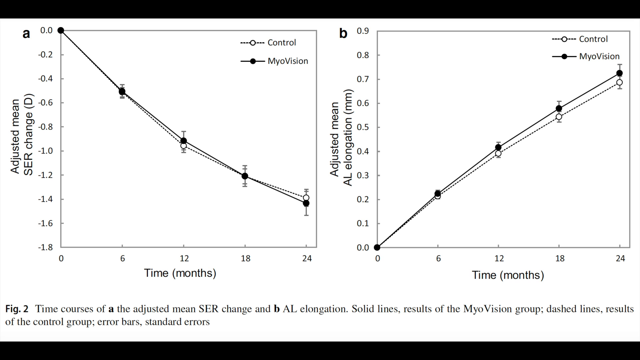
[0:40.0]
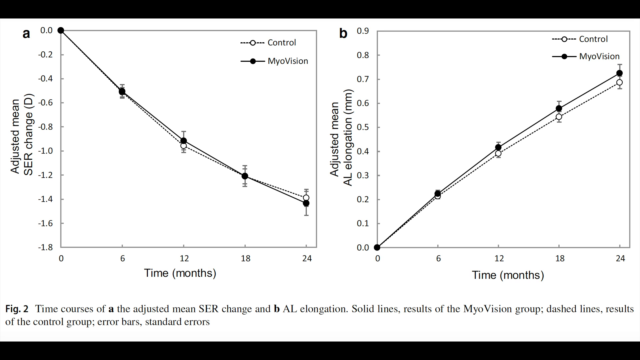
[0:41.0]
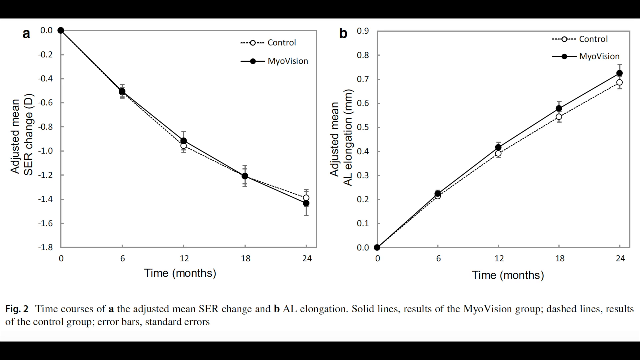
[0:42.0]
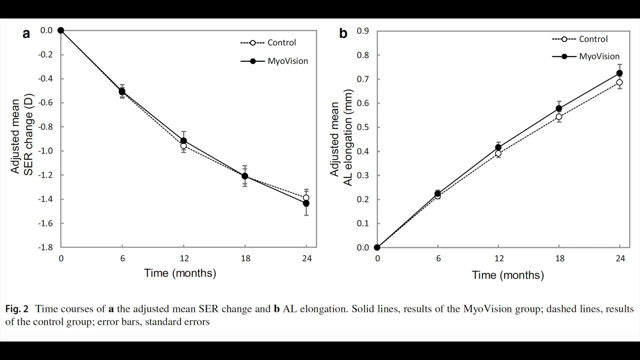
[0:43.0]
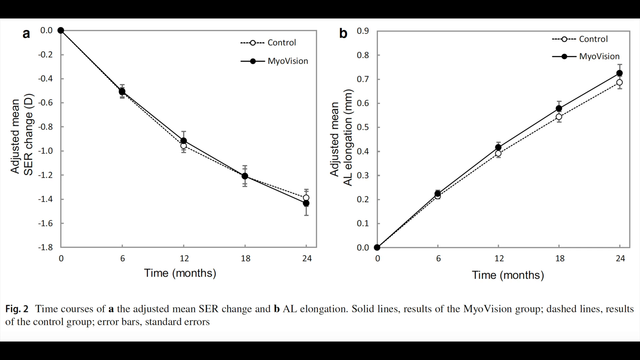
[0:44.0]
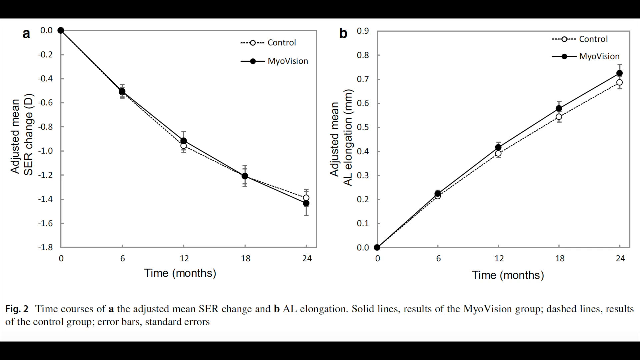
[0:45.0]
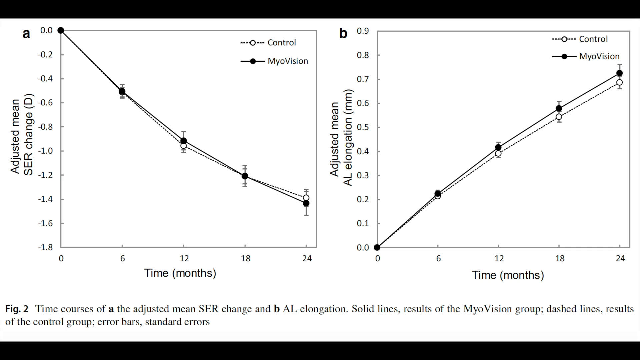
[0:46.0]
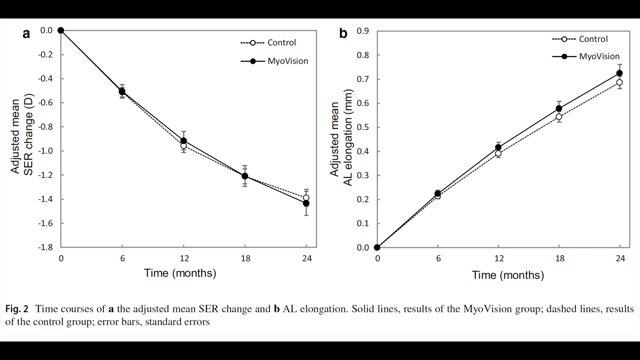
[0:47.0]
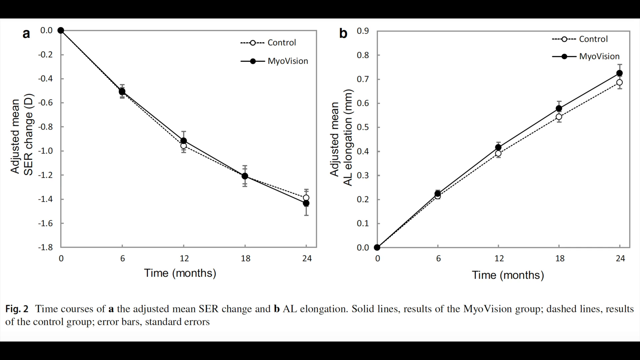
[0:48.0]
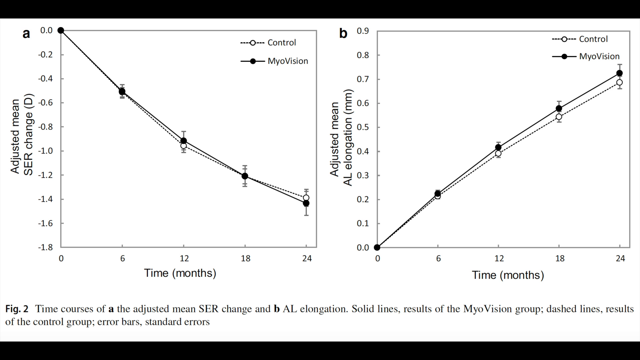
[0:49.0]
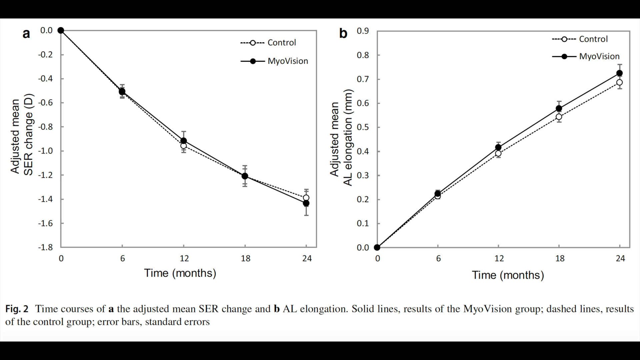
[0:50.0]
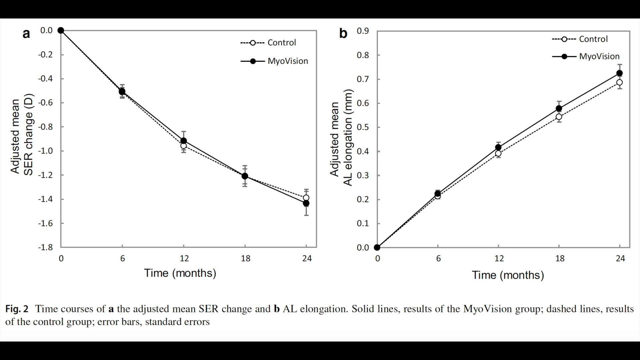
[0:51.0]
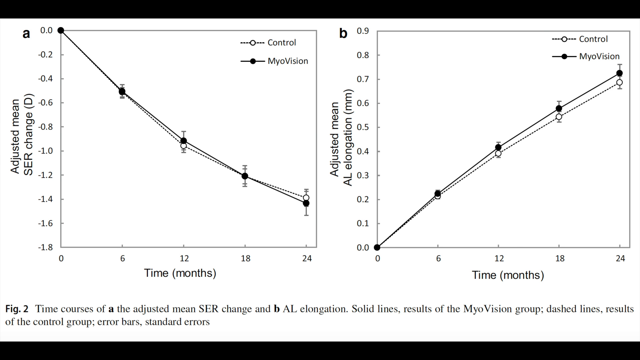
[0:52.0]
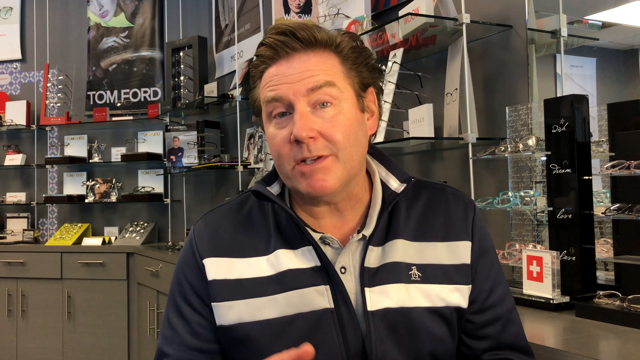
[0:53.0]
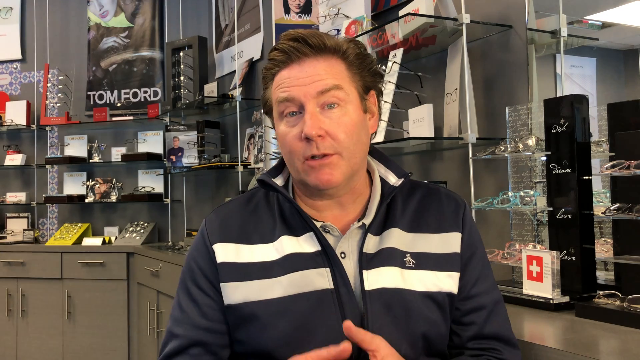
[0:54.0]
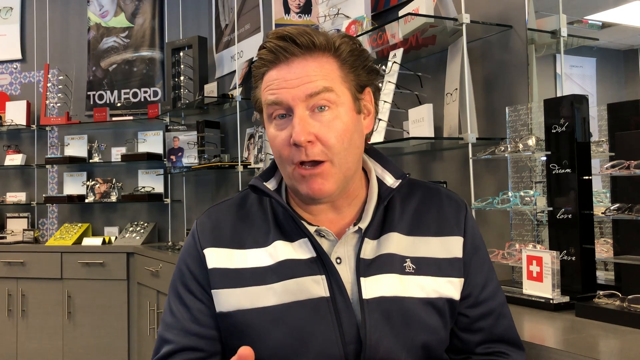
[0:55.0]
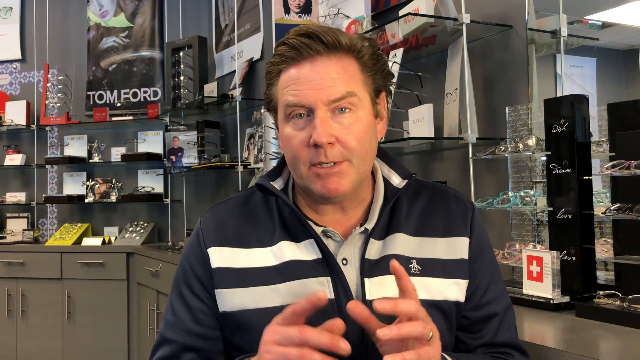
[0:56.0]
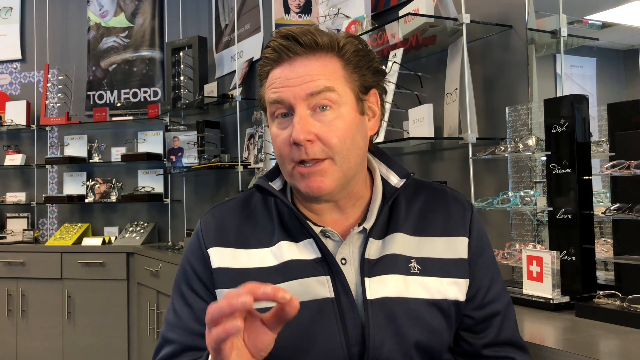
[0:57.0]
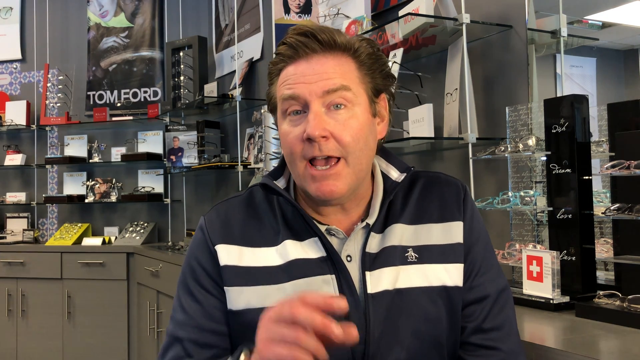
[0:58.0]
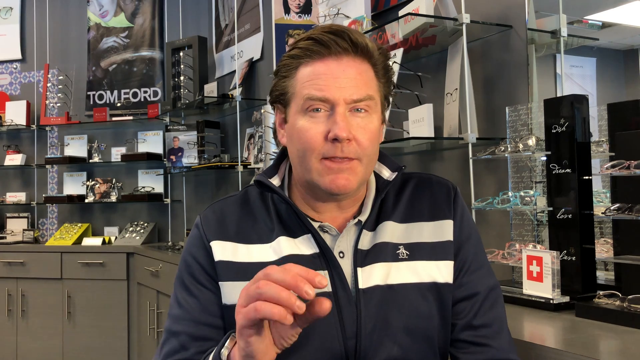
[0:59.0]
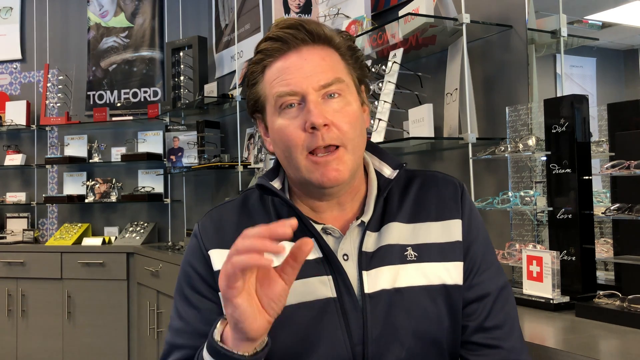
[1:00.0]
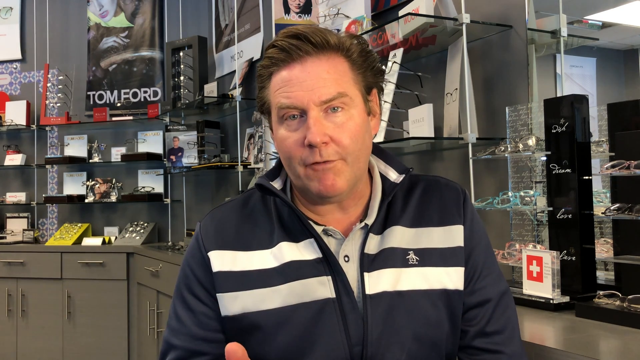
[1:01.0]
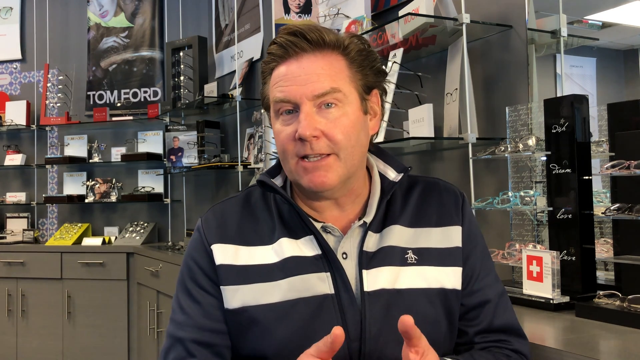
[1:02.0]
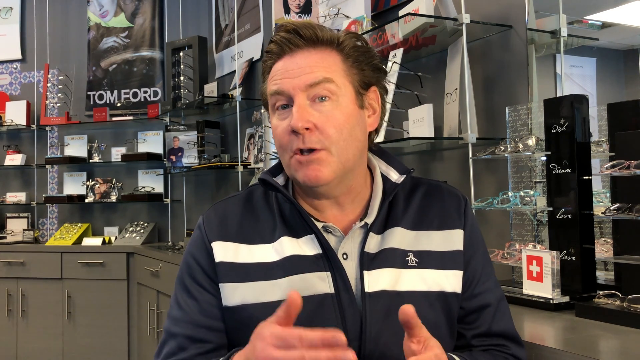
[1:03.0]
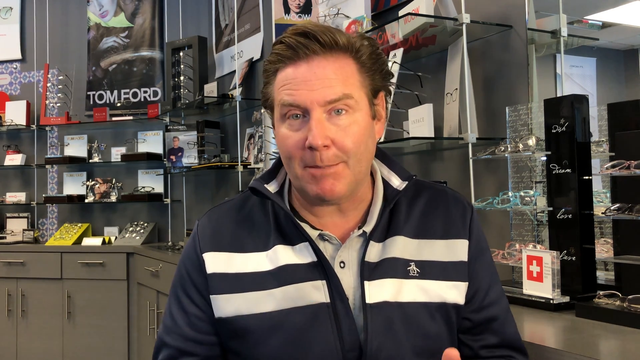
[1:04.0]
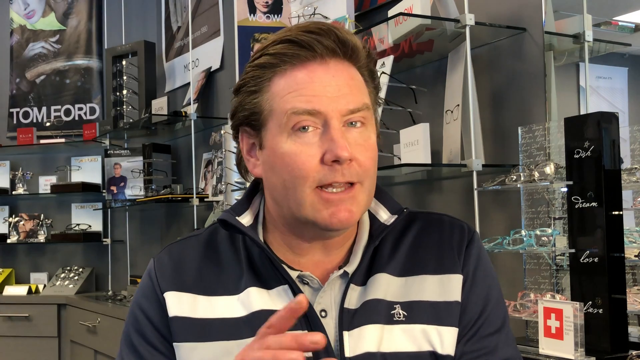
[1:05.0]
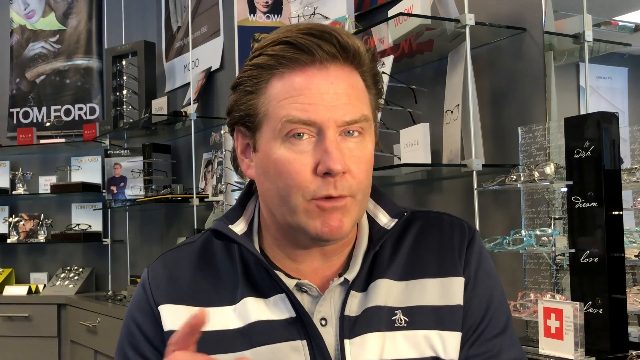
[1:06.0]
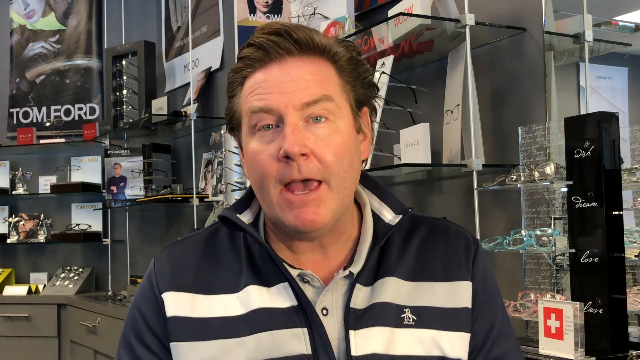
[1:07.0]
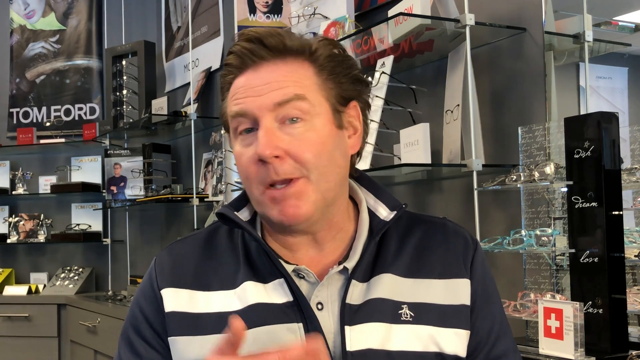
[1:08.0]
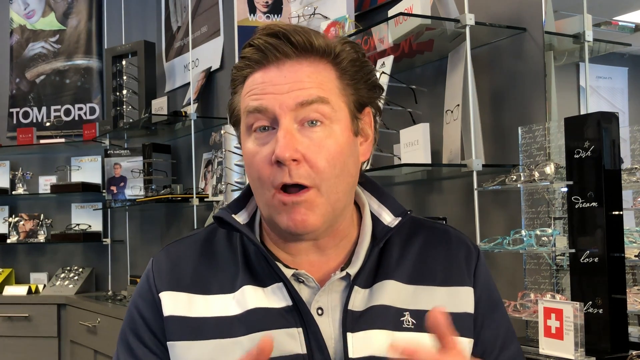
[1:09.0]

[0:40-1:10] The chart shows differing results between the control and myovision groups over time in months. The video then returns to the optometrist, a Caucasian man probably around 30 to 35, on the heftier side, with short brown hair. He wears a navy blue shirt or hoodie with horizontal stripes that run in dashes up to the zipper of the hoodie or jacket. He makes hand gestures as he talks. No other people or animals appear, and the setting does not change apart from the screen showing the information on the papers.